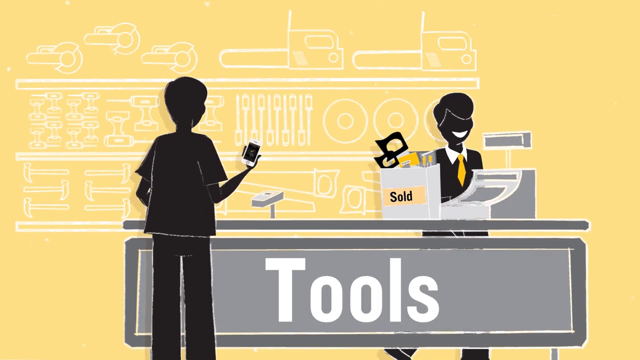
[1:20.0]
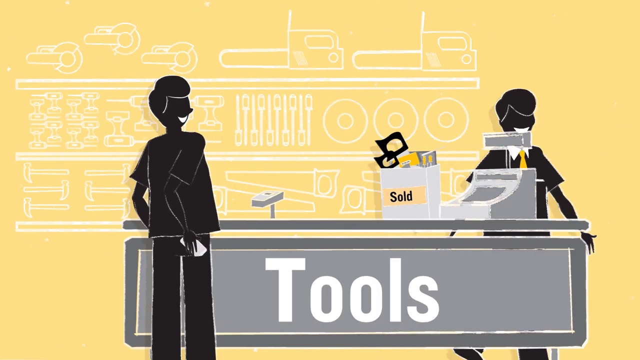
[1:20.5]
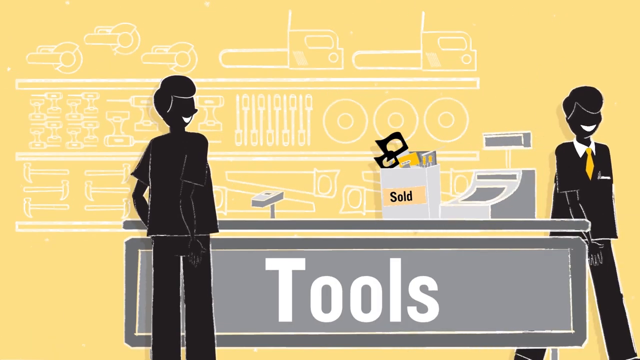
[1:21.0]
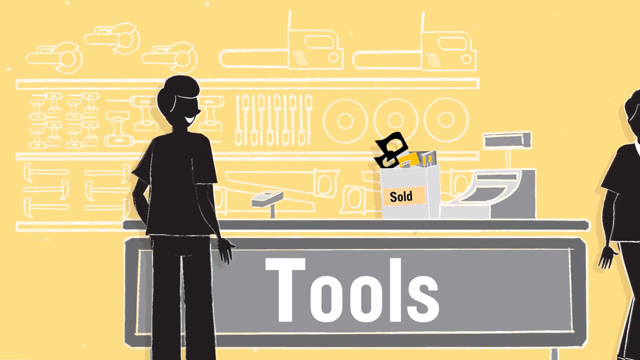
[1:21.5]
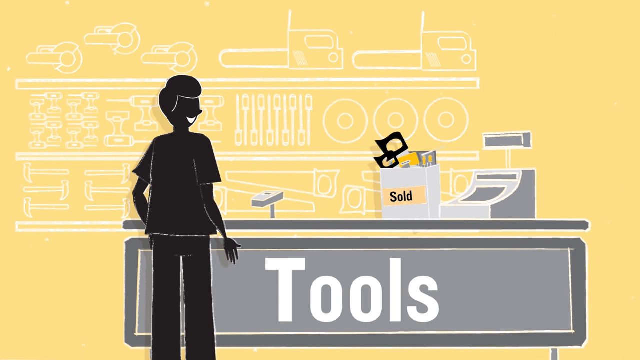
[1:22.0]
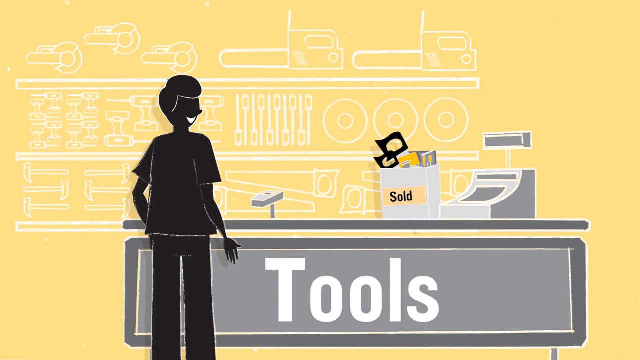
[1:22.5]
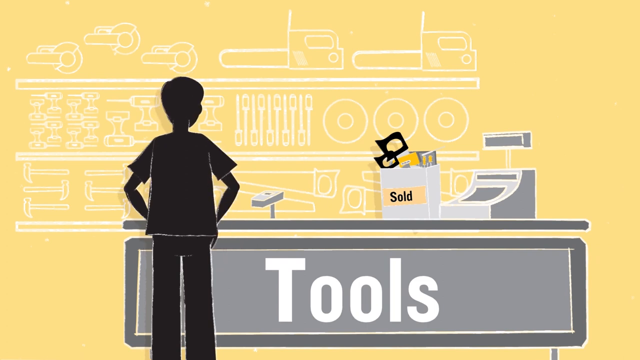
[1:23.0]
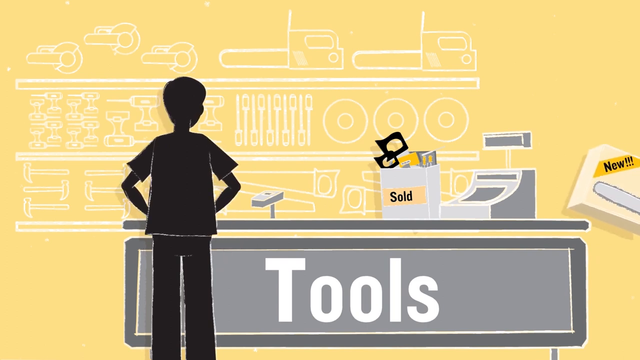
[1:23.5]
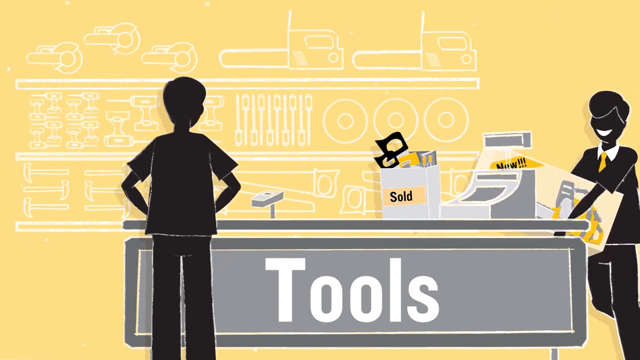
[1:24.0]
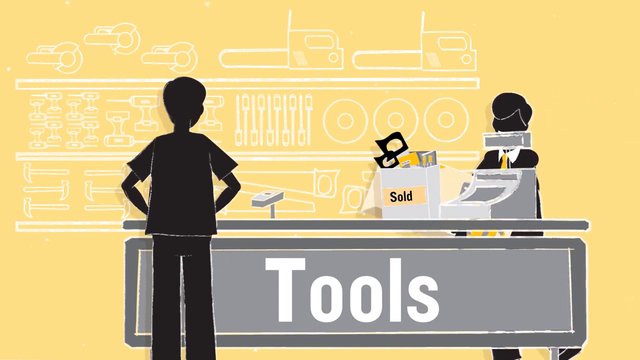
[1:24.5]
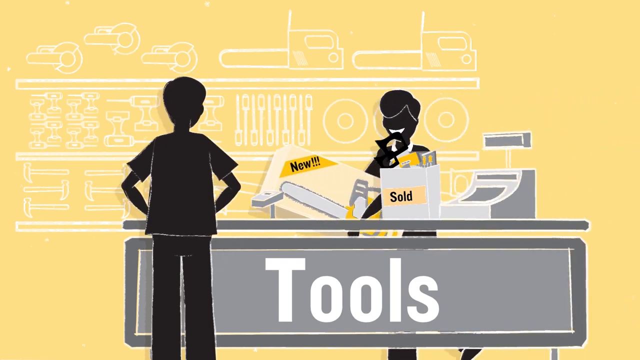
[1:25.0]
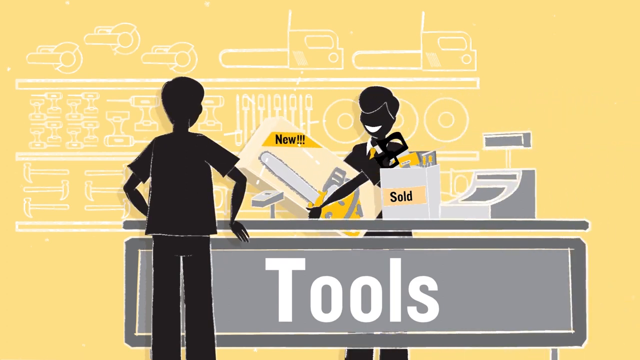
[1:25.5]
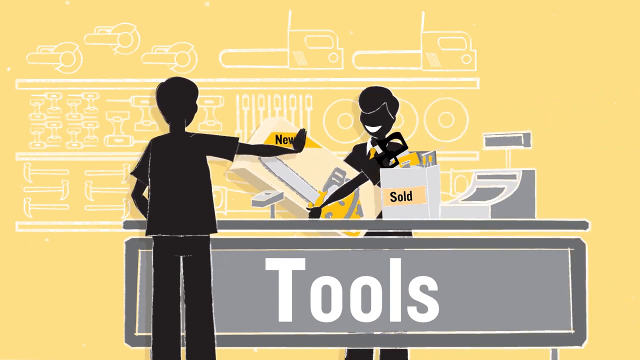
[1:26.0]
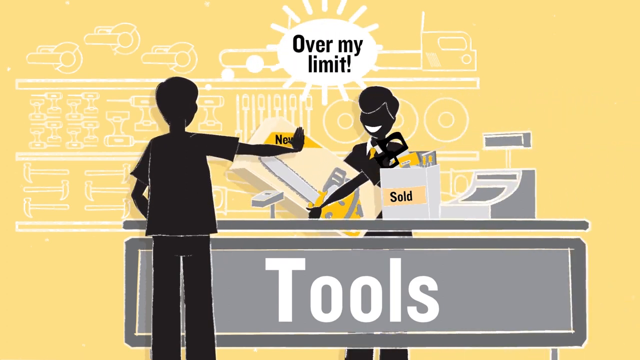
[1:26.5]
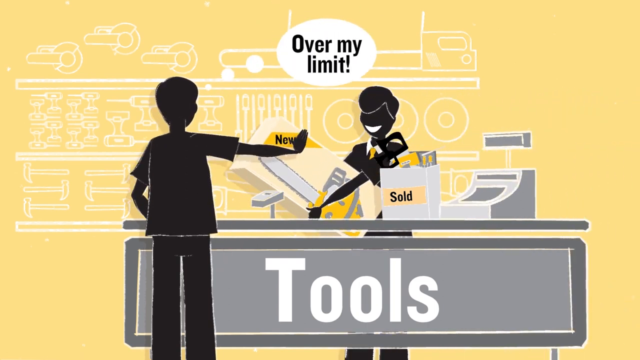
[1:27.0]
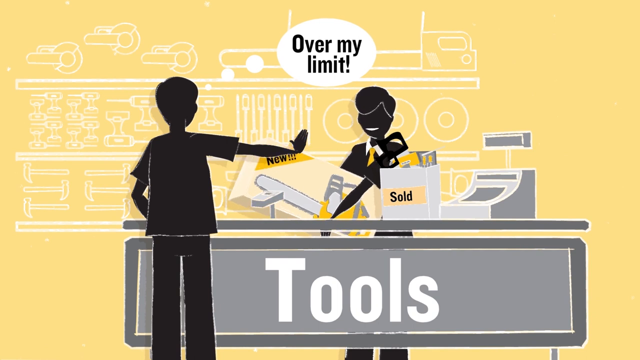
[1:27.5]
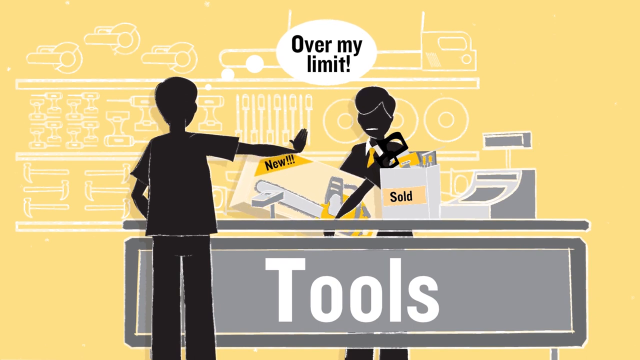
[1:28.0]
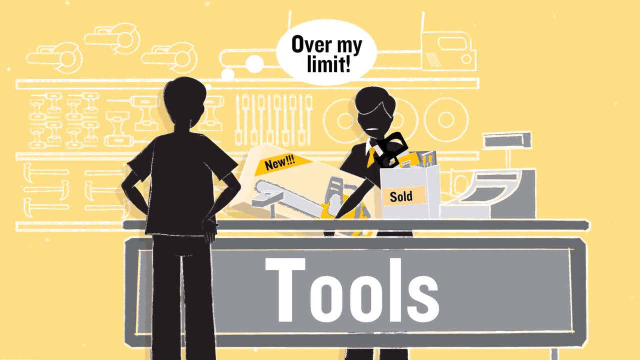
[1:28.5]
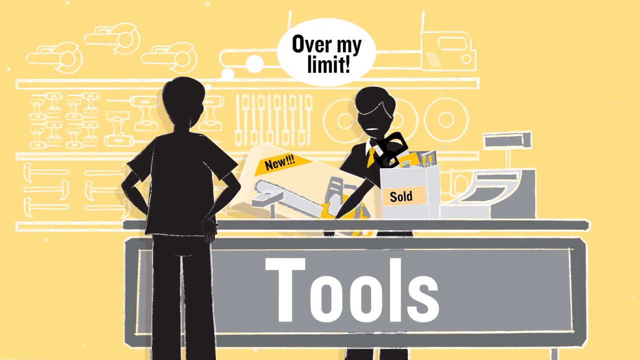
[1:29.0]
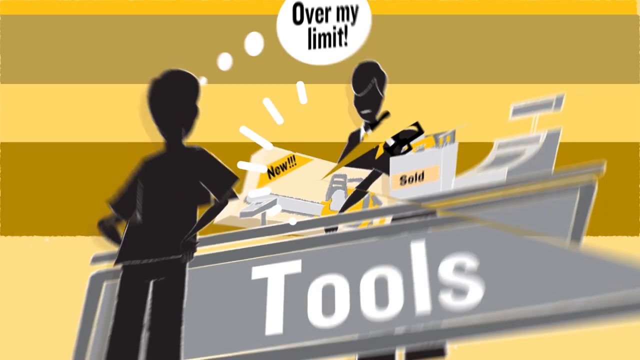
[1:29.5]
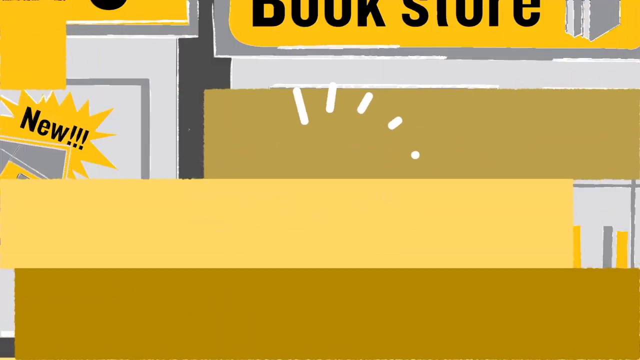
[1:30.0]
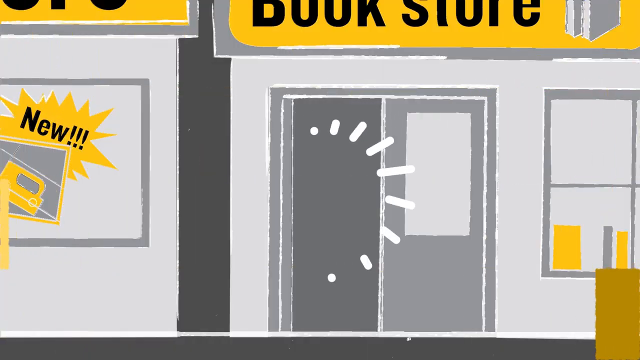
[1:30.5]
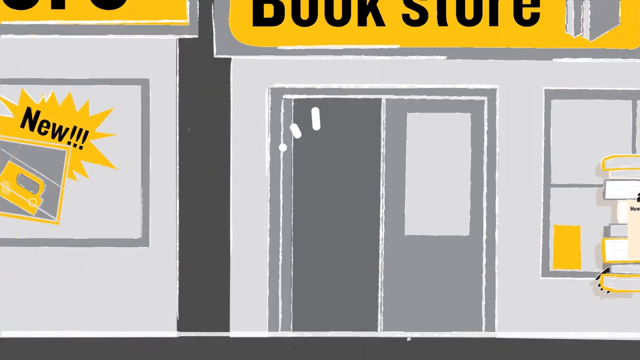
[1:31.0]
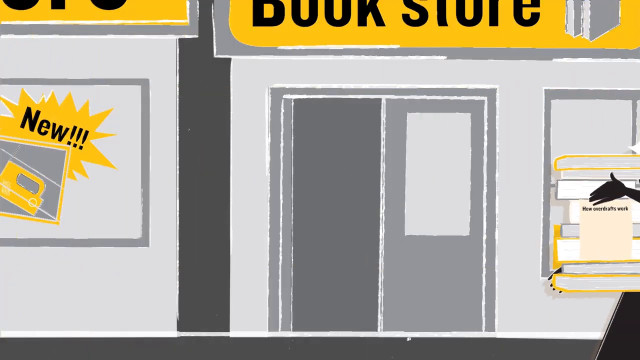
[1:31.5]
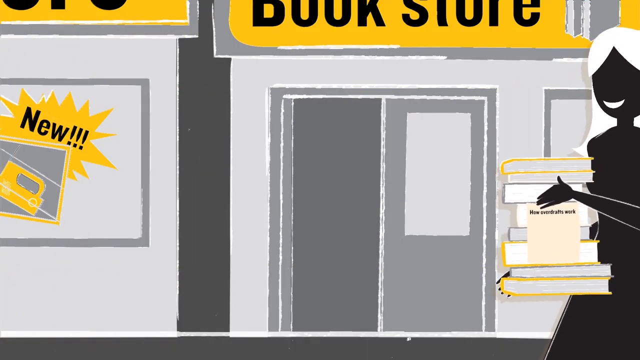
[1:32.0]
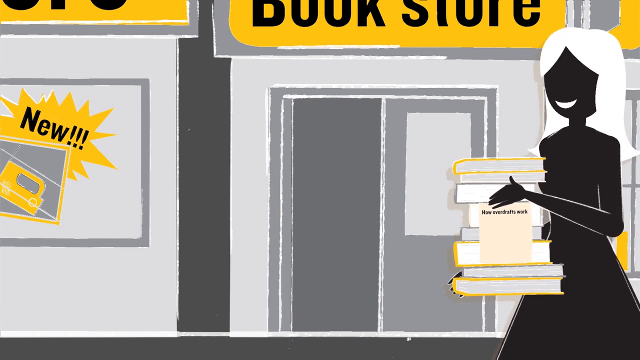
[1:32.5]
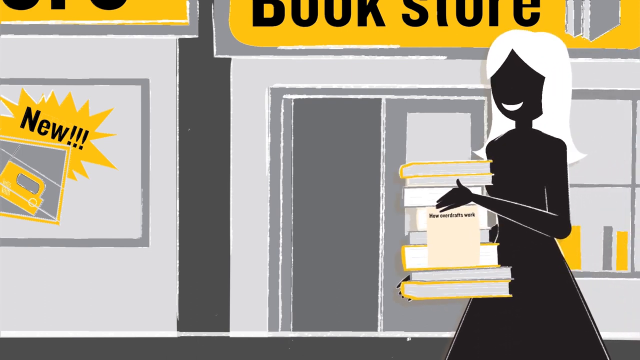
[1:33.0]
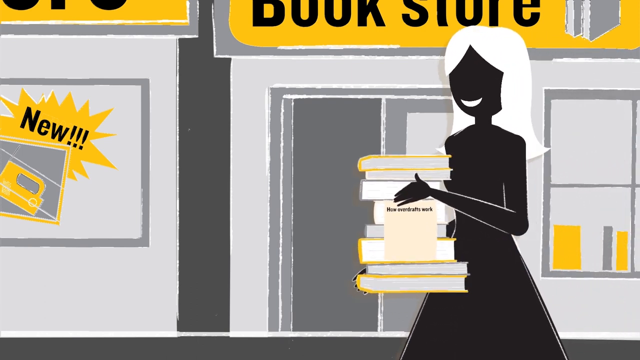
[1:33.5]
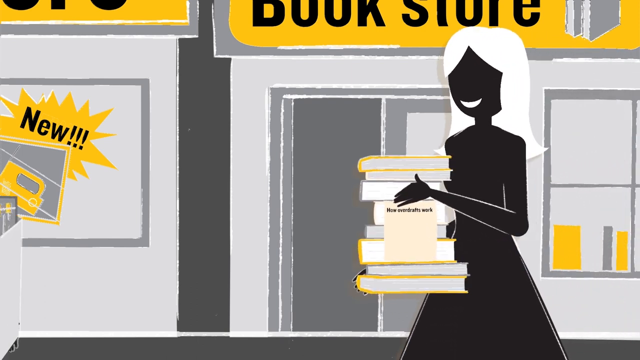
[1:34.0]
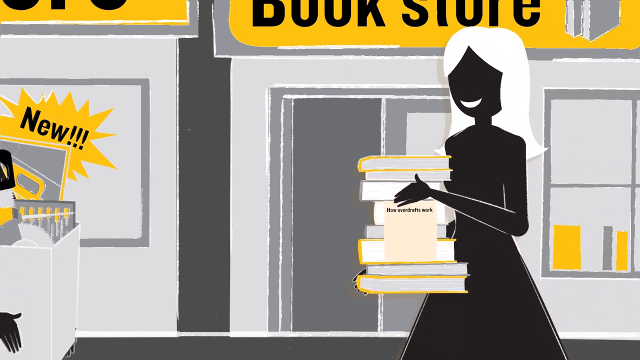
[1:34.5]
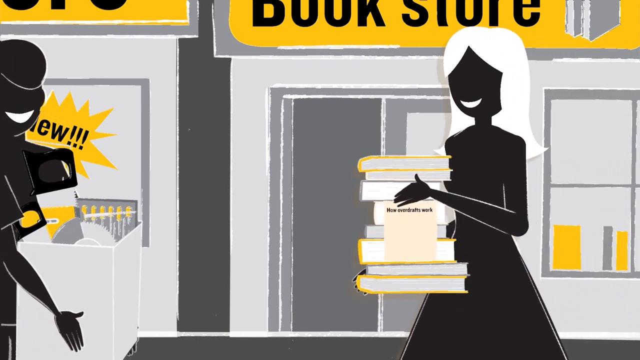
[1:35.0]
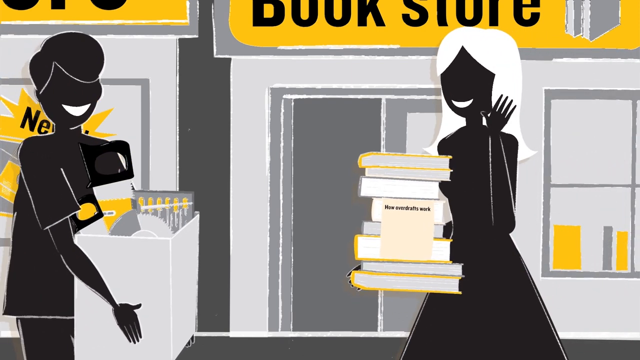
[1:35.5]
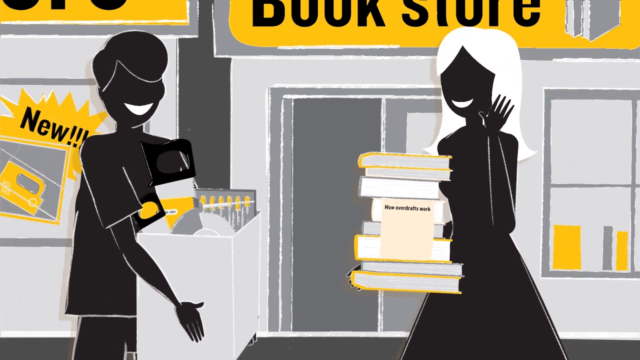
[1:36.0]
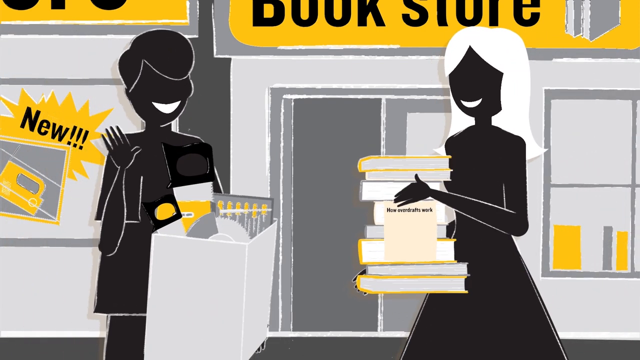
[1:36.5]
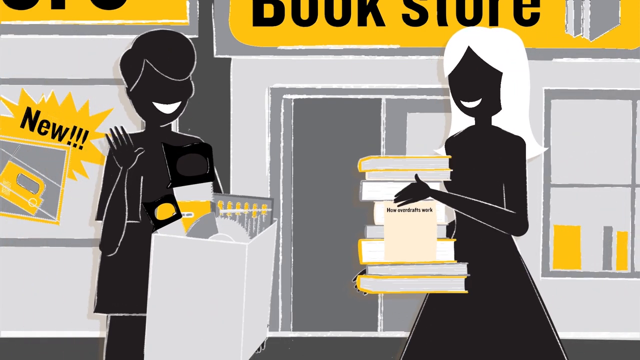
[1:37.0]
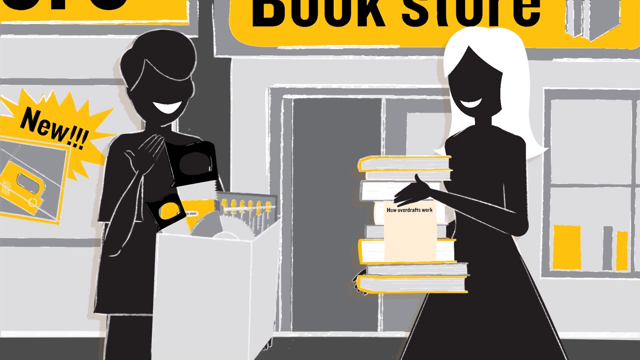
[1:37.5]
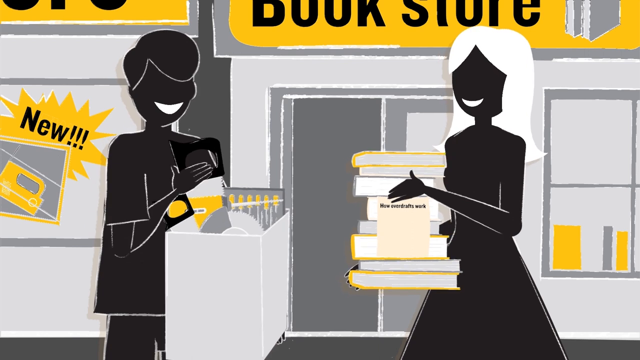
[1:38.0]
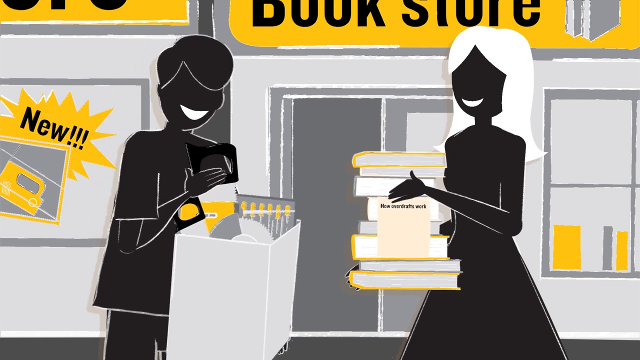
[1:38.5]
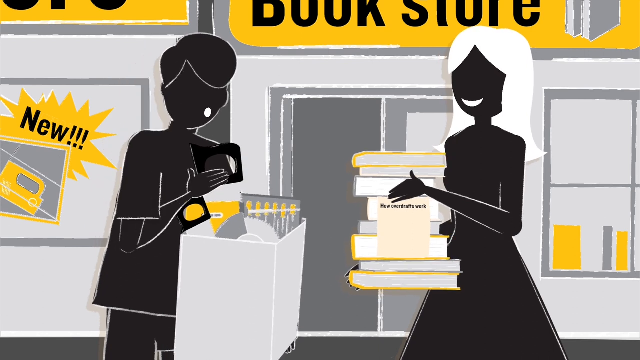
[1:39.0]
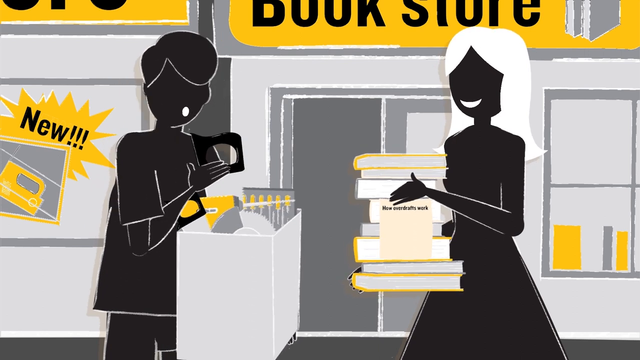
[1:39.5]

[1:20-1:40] One person brings something, and a woman is seen going to the bookstore while another person is still bringing things. They are trying to exchange, and items are sold and paid for.